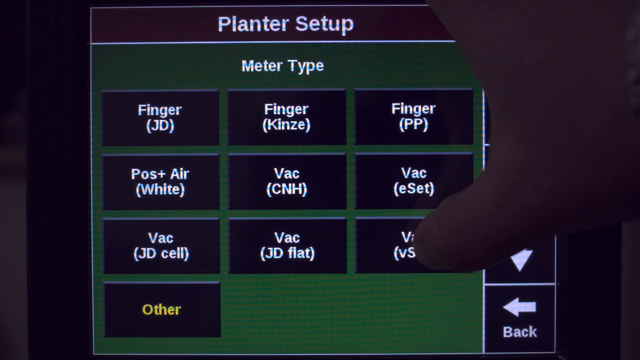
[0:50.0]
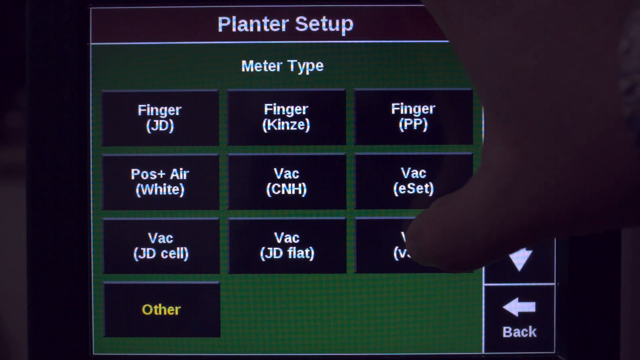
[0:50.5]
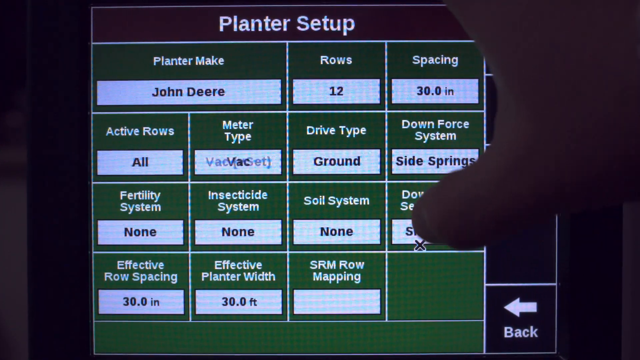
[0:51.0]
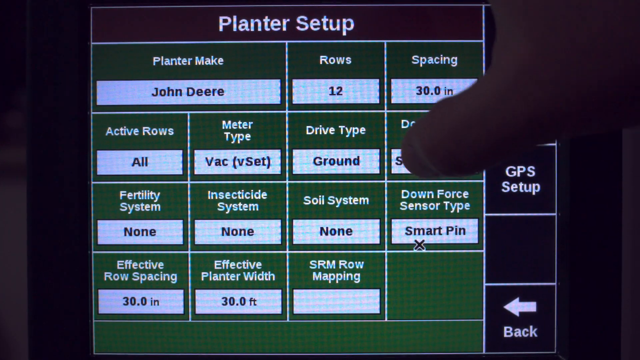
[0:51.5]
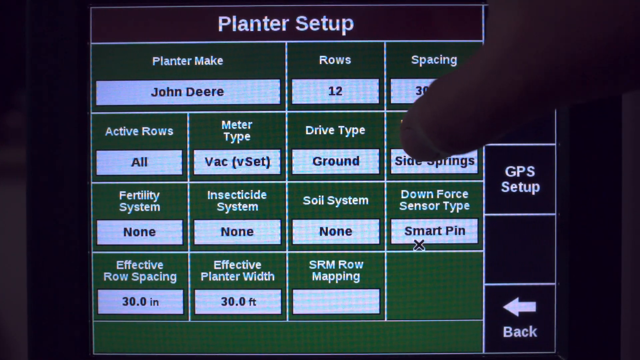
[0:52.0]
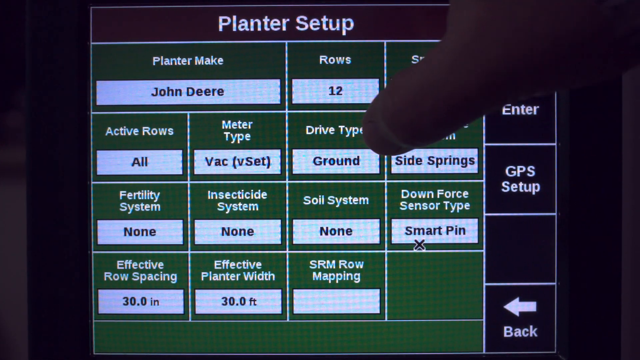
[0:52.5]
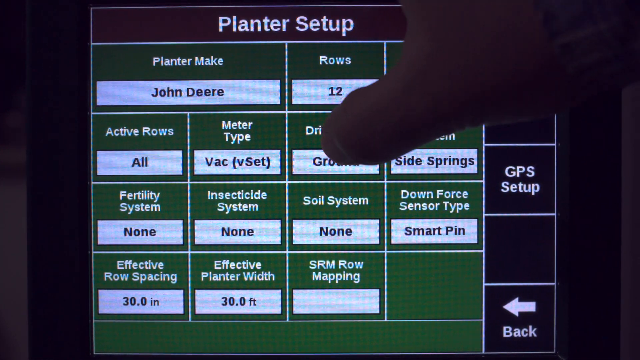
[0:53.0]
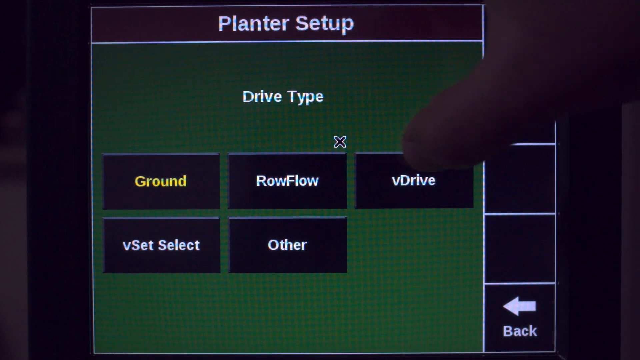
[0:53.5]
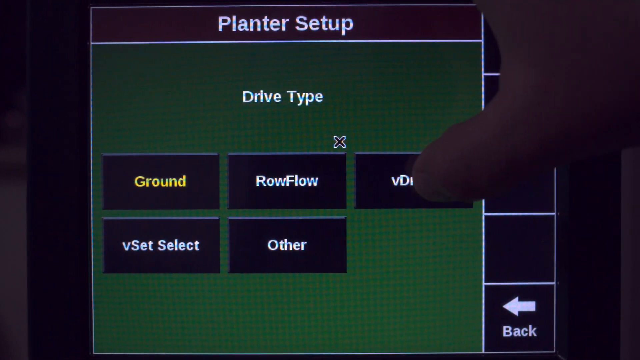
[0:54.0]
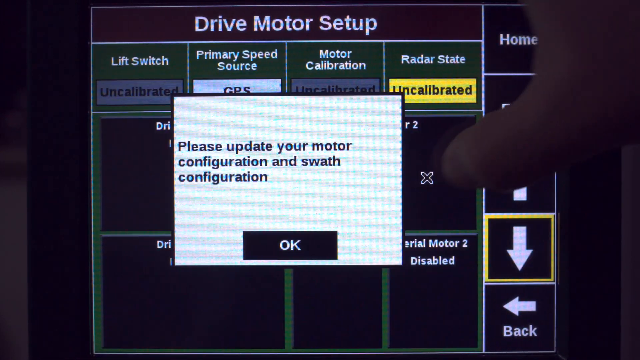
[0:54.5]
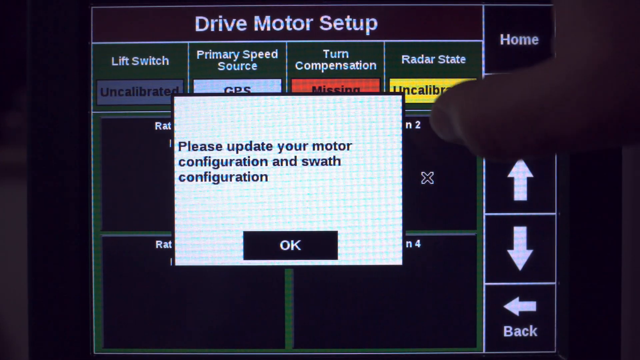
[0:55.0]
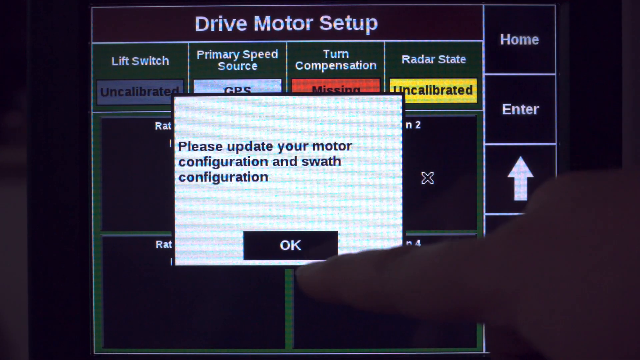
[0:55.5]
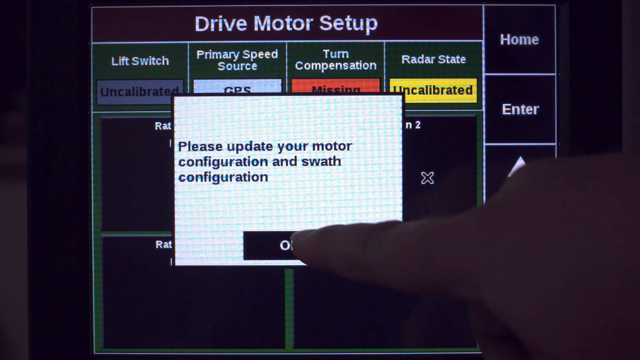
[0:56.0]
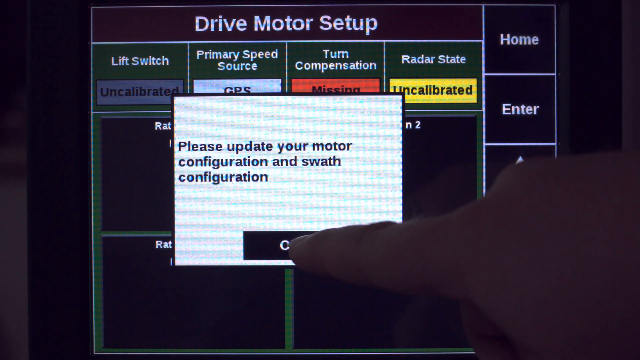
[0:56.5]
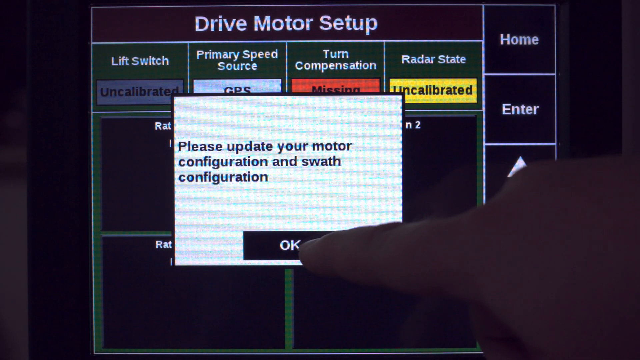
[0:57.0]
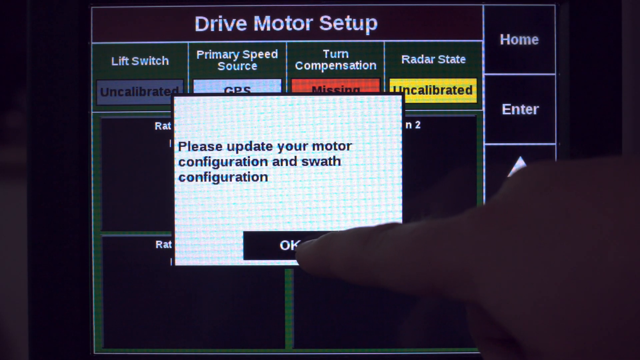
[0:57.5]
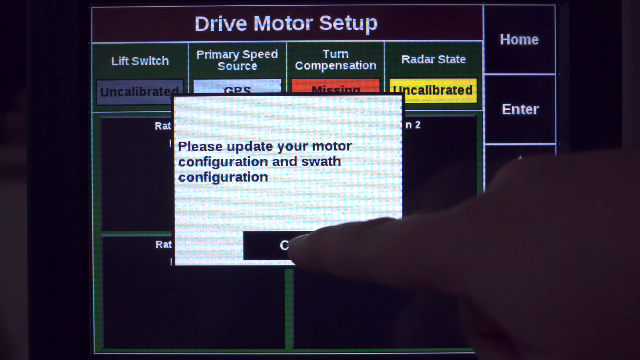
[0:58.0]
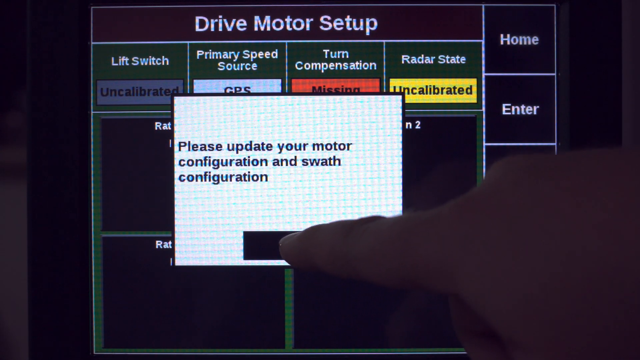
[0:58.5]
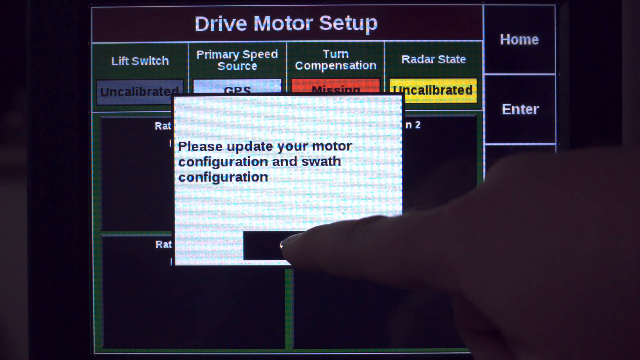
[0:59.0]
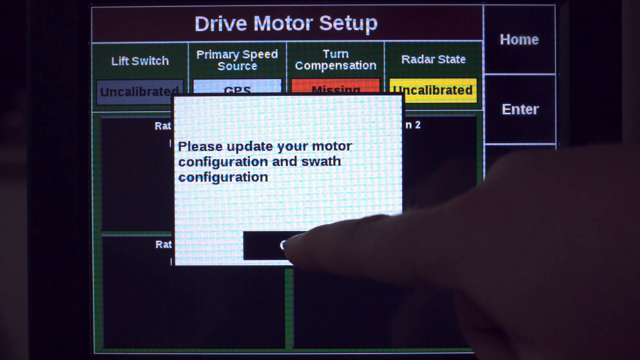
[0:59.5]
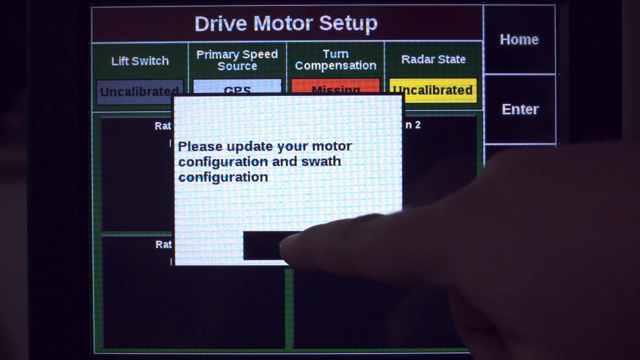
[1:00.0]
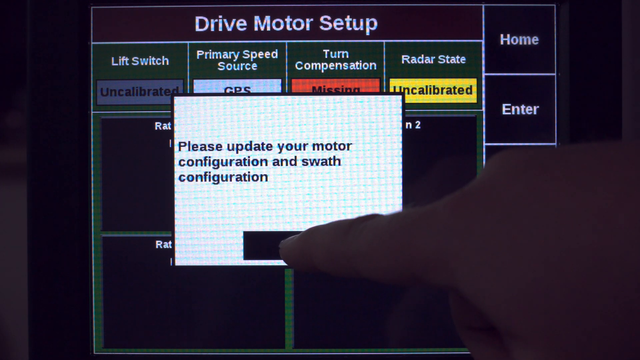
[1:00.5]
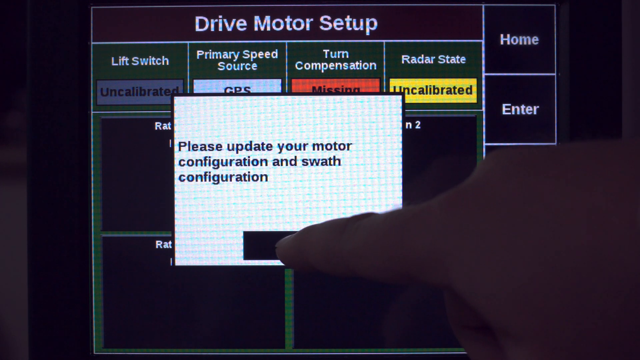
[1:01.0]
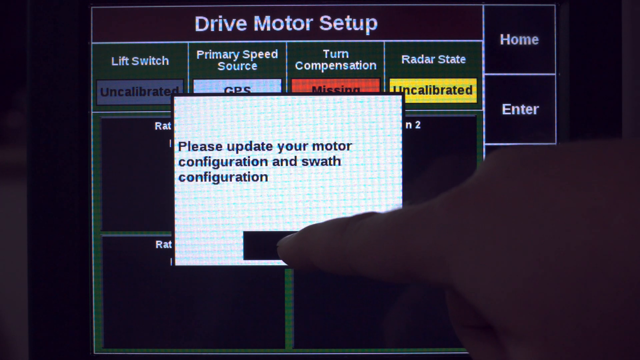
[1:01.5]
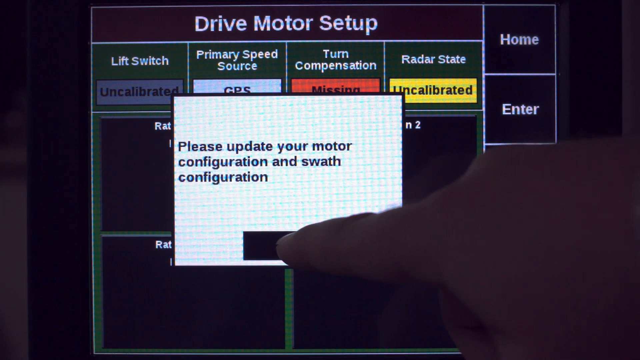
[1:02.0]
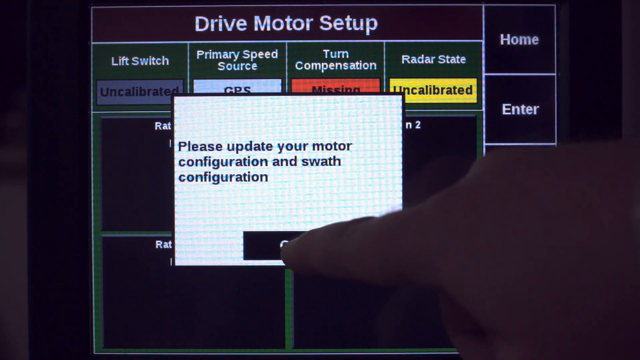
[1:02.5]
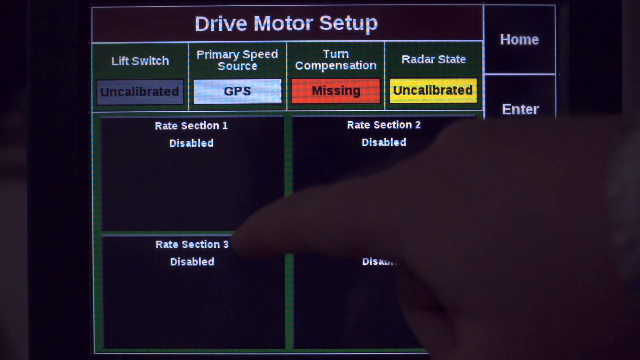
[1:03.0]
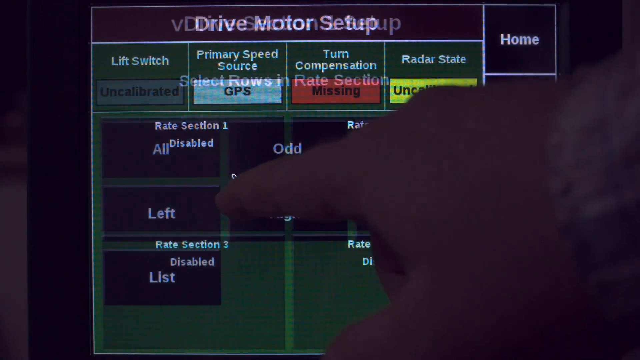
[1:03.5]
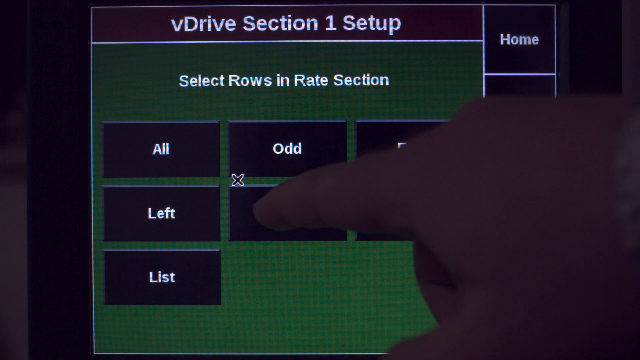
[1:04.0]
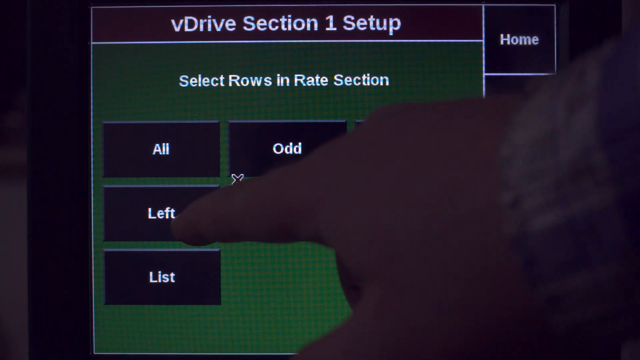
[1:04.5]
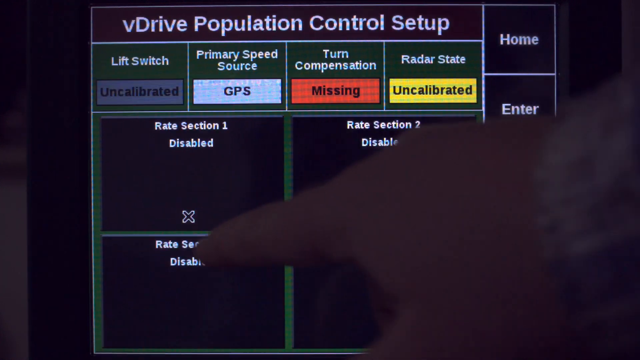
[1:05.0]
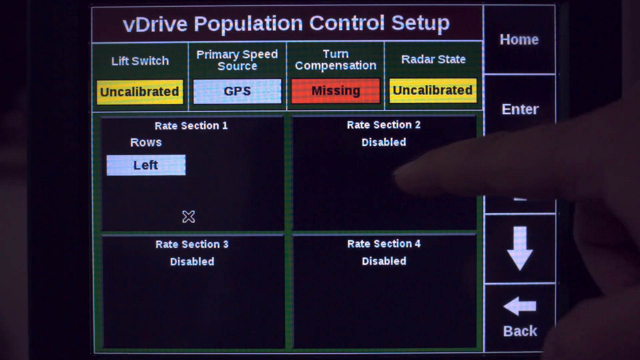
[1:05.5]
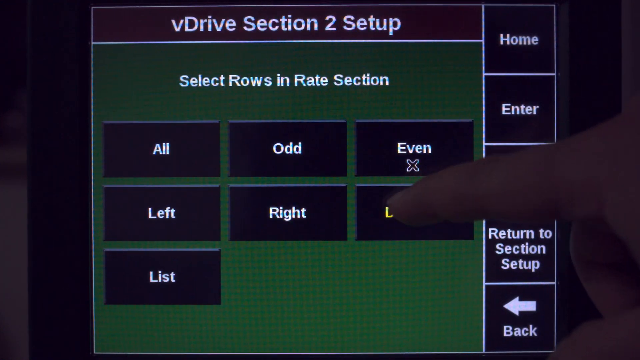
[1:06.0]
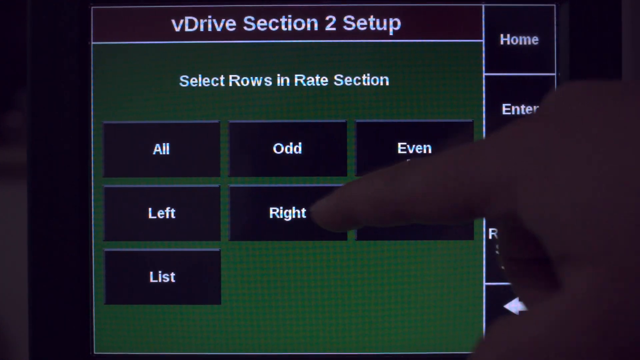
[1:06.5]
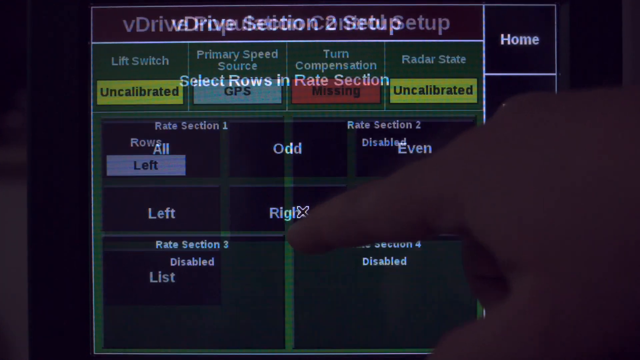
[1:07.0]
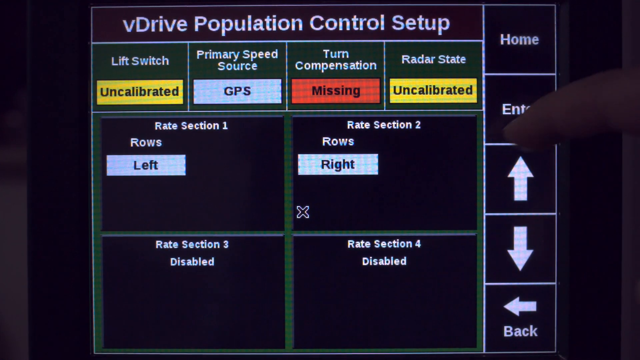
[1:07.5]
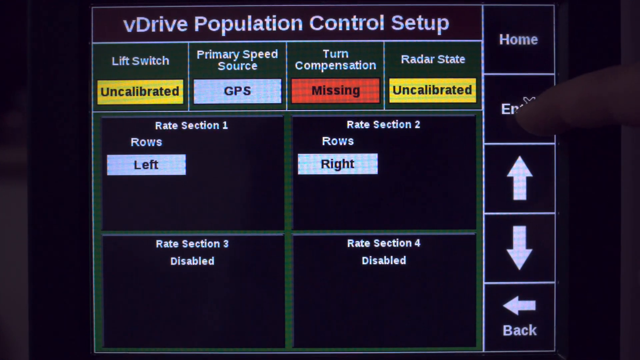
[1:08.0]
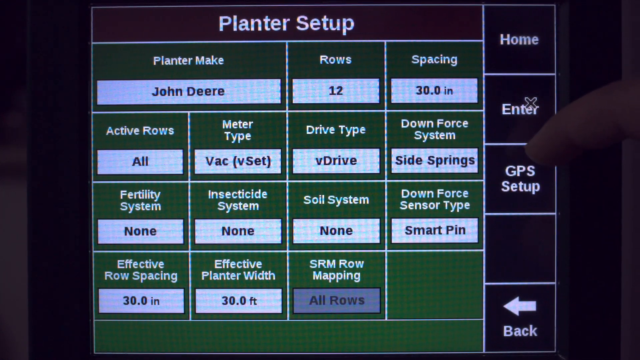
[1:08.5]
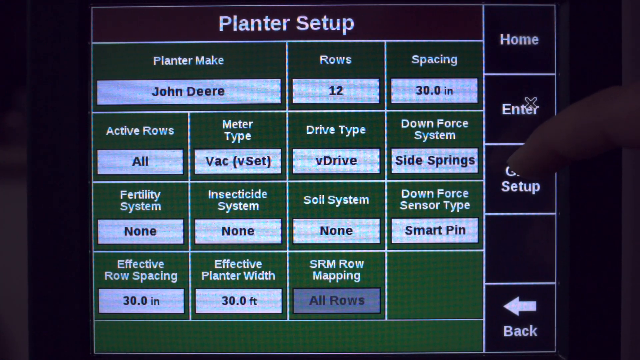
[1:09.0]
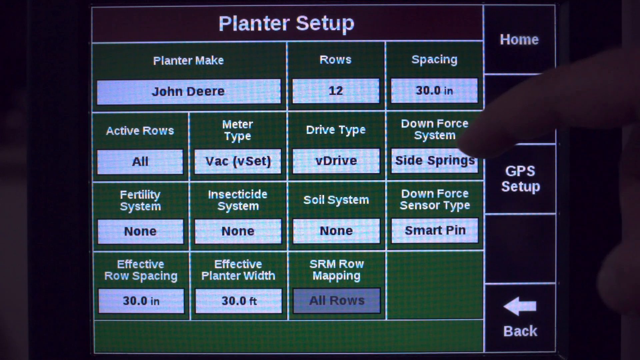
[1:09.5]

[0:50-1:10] A computer program, maybe for farmers or people who plant a lot of food to keep track of their plants, is open on a page that says "planter setup". A "drive motor setup" pop-up lists a left switch, a primary speed source, turn compensation and radar state. In front of it, another pop-up in a white box says "please update your motor configuration and swath configuration." A box at the bottom that says "okay", in white print on a black box, is clicked. Next a box that says "left" is clicked, followed by "side spring". In the planter setup, an area at the top says "meter type" with options in a three-by-three box, including finger, JD, finger PP, post air, vac, vac e-set, vac JD cell, vac 3D flat, and a vac option with VS.